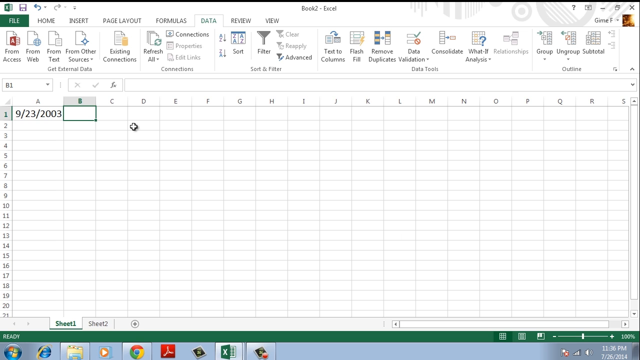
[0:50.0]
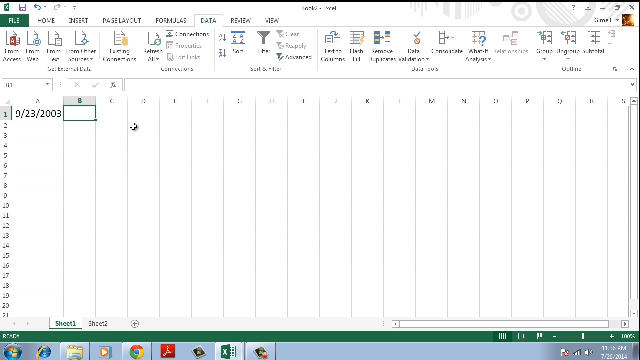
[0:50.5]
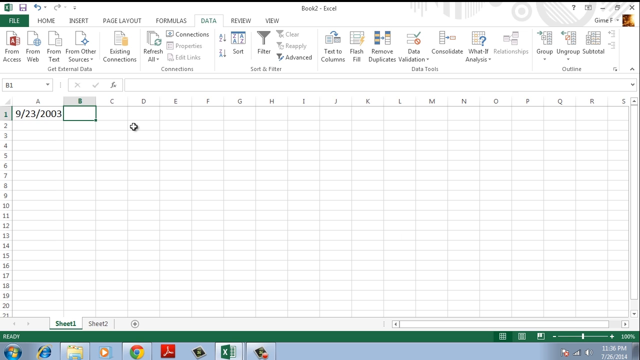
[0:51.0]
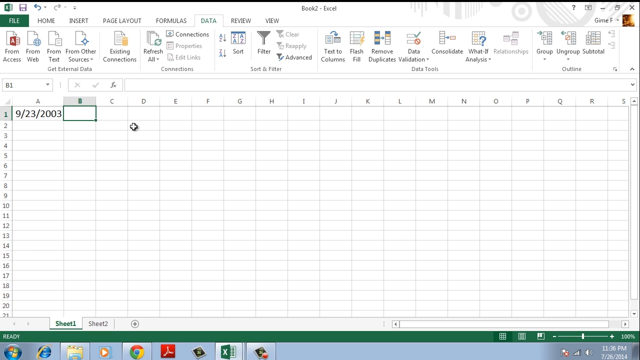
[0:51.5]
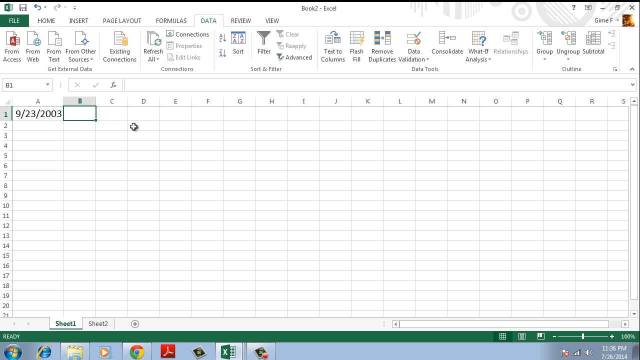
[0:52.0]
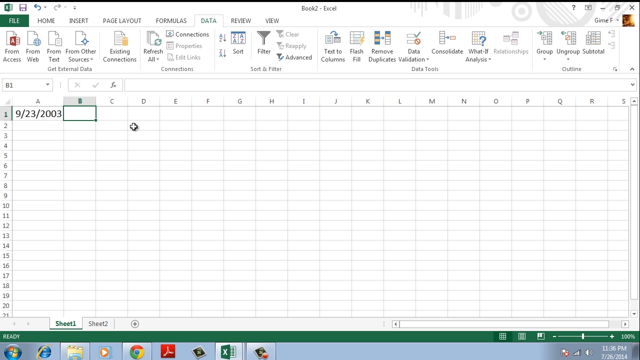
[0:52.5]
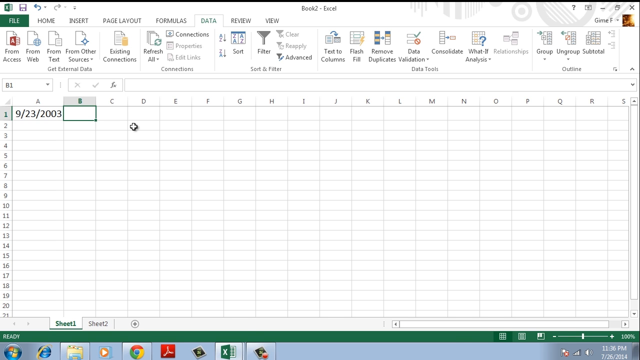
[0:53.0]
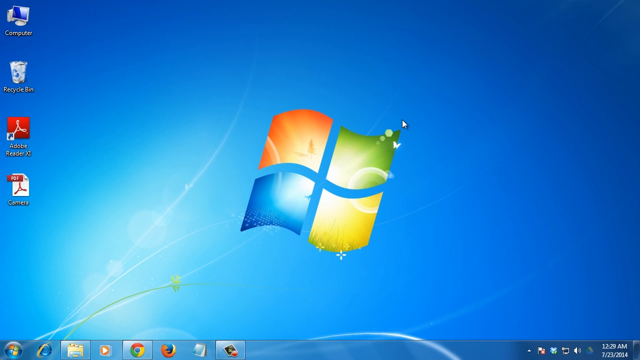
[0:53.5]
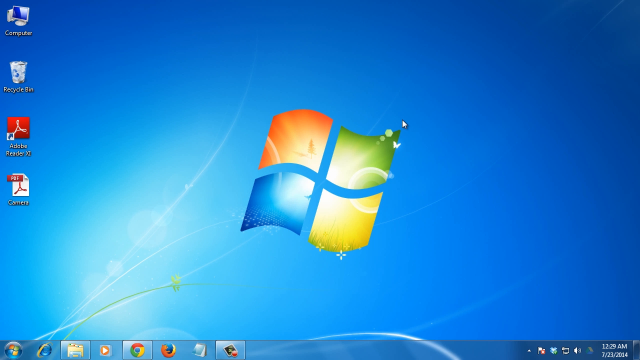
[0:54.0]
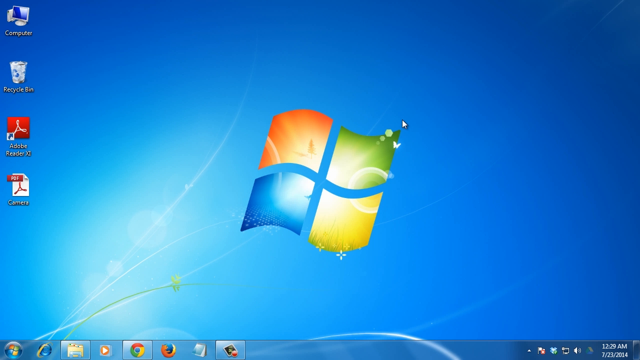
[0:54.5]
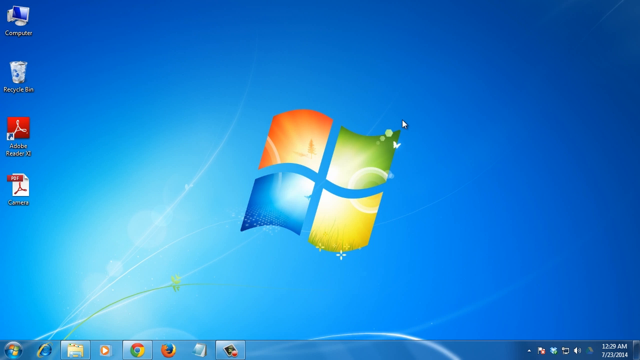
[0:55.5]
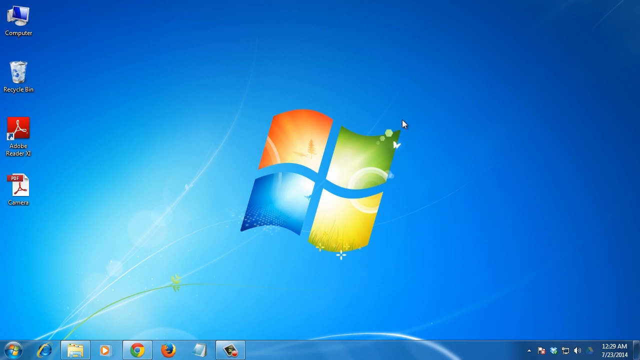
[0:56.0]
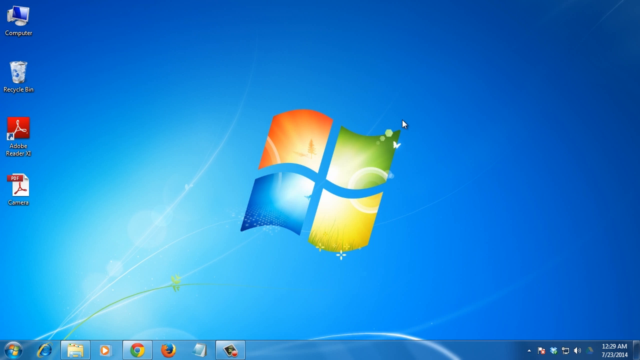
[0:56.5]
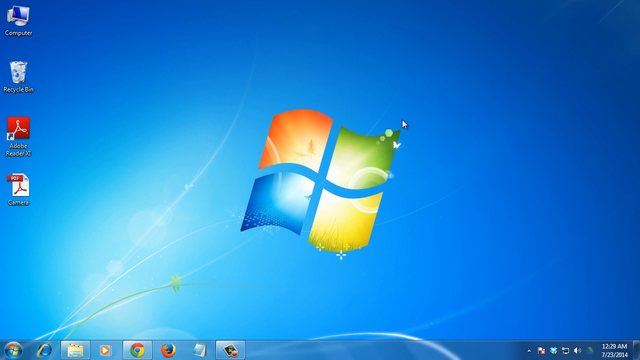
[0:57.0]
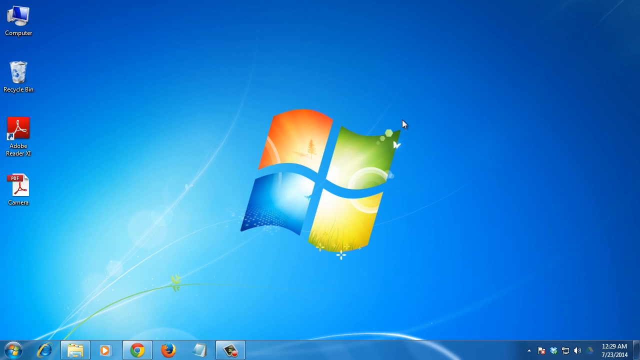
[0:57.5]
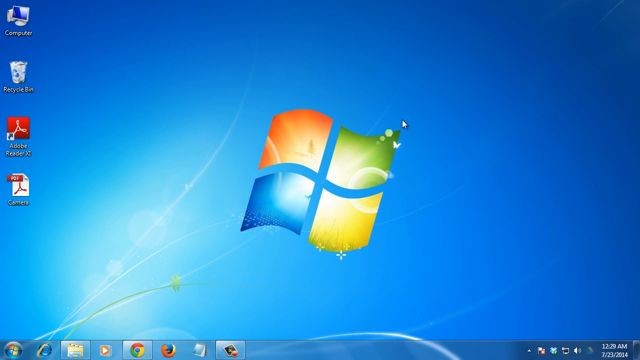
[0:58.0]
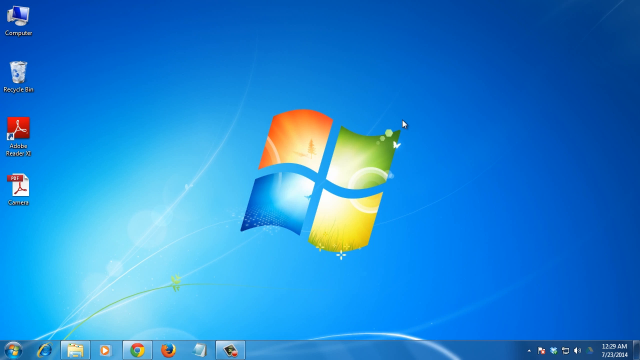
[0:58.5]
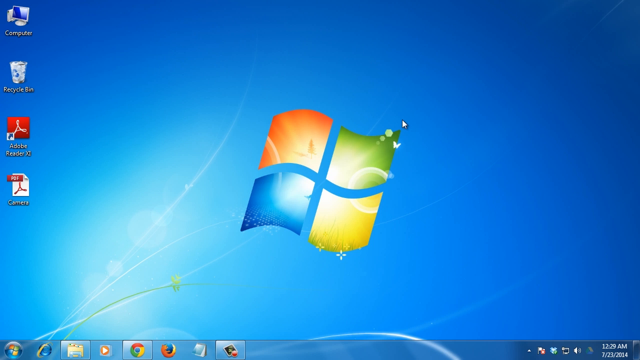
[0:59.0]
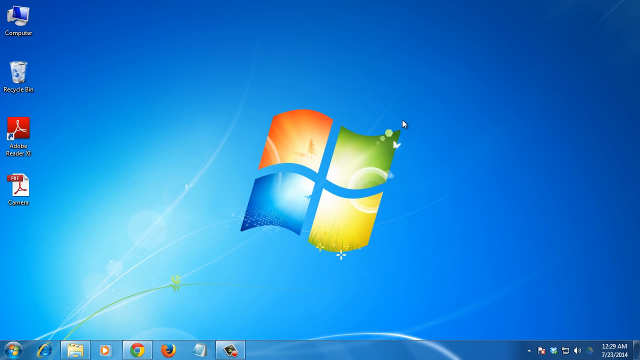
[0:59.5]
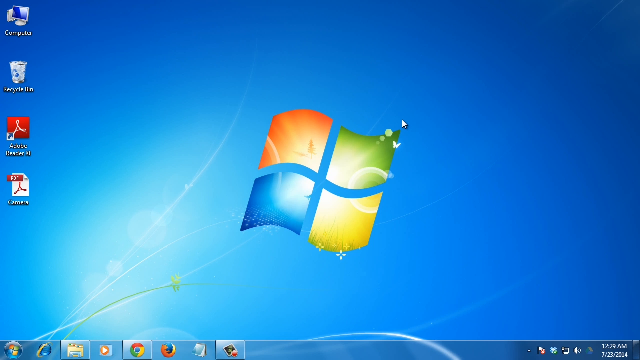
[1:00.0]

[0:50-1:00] Cell B1 stays selected with nothing typed into it, and Microsoft Excel is closed, returning to the Windows Vista or Windows 7 desktop. The taskbar at the bottom still shows Google Chrome open but minimized, along with another minimized window. The desktop is fairly empty, showing only a PDF document icon, an Adobe Acrobat Reader icon, the Recycle Bin icon and the Computer icon. Nothing else happens and not even the cursor moves; the screen stays this way until the video ends.